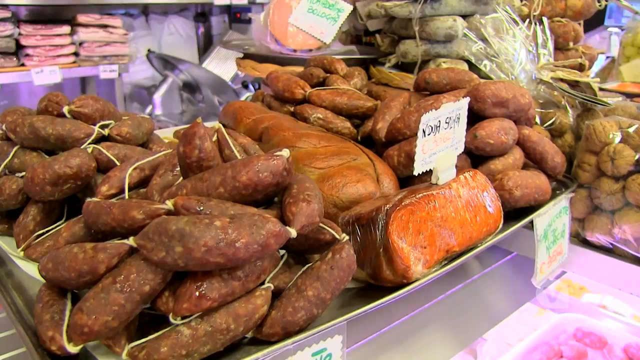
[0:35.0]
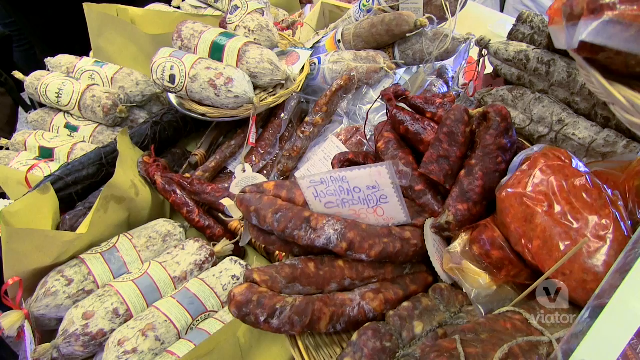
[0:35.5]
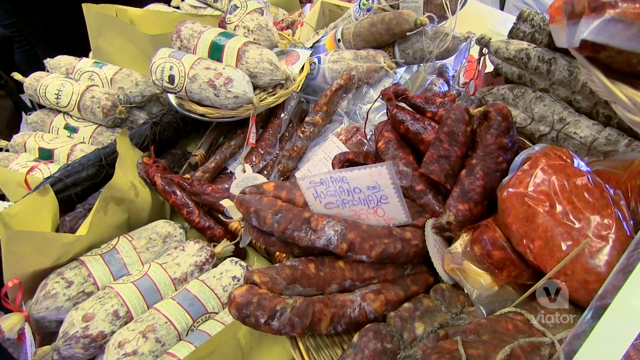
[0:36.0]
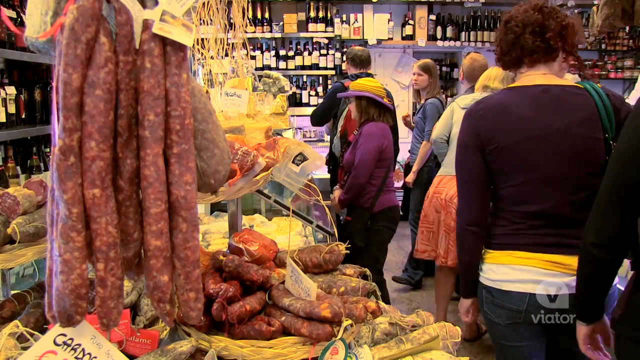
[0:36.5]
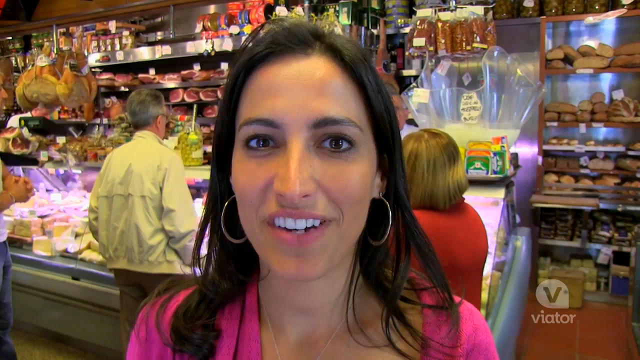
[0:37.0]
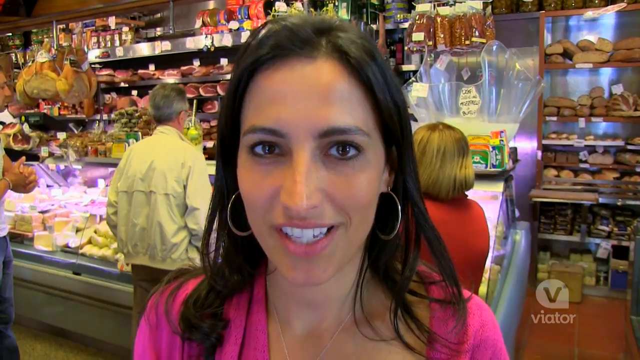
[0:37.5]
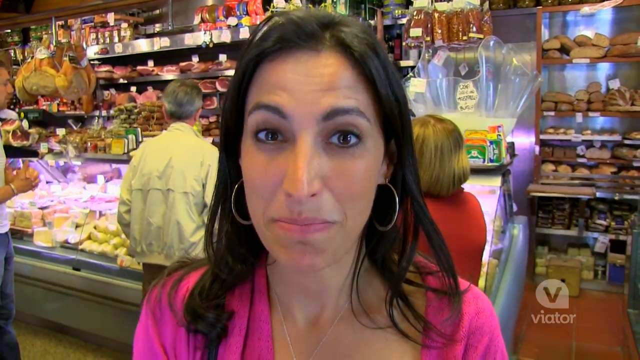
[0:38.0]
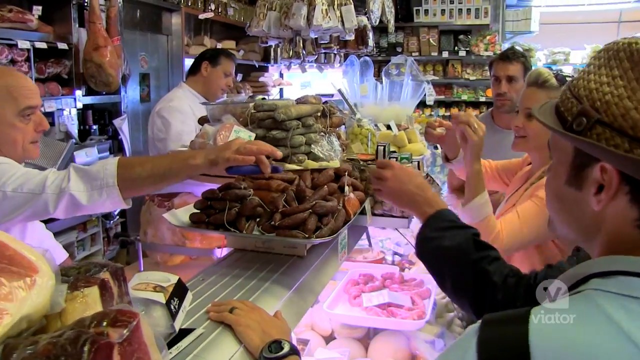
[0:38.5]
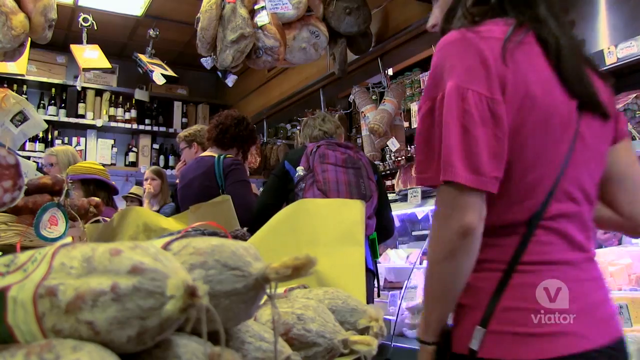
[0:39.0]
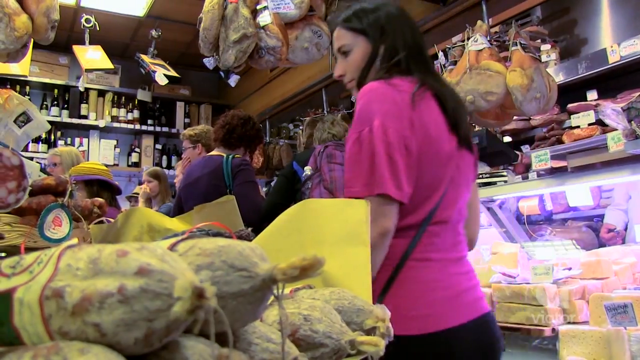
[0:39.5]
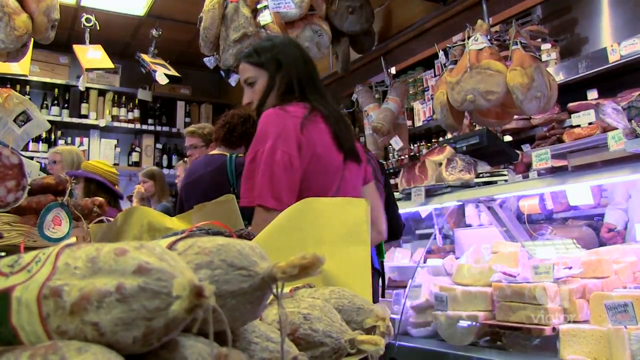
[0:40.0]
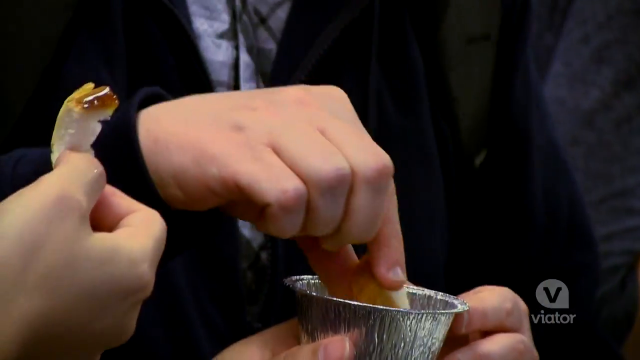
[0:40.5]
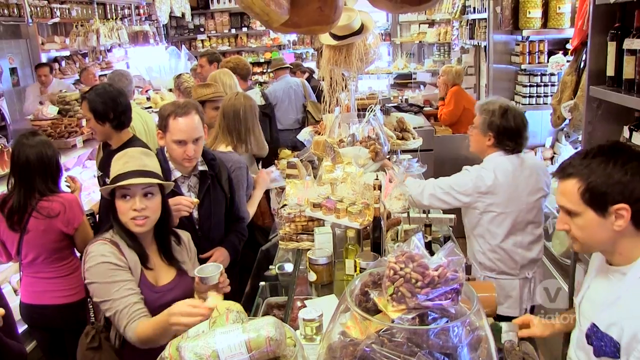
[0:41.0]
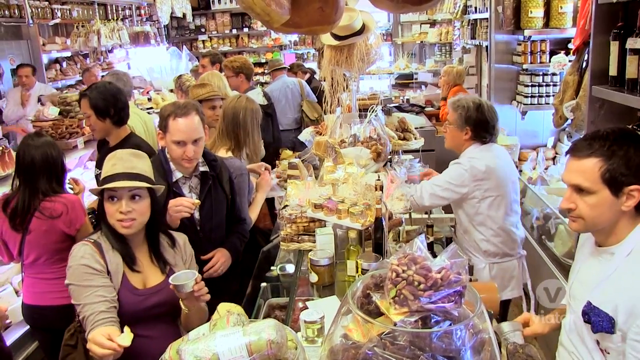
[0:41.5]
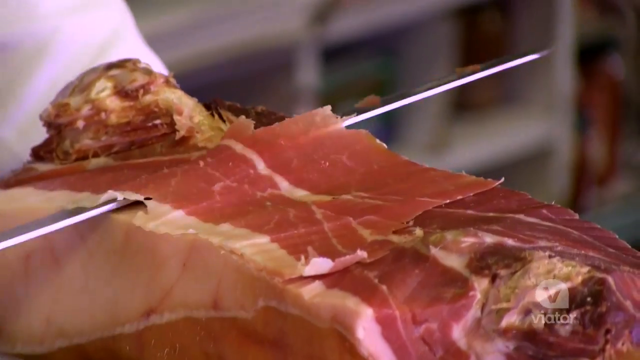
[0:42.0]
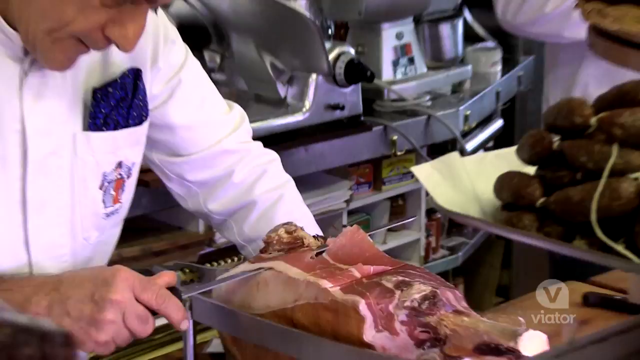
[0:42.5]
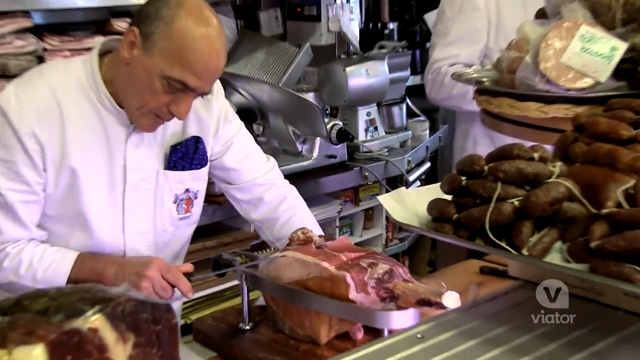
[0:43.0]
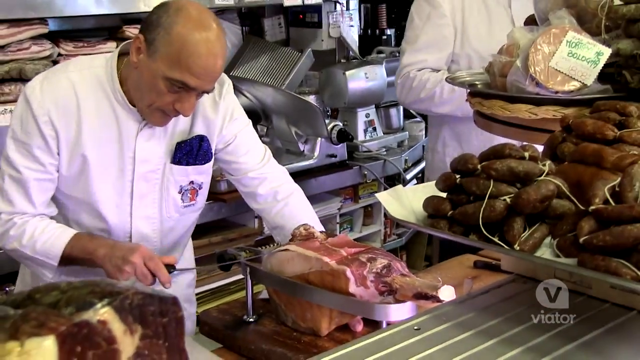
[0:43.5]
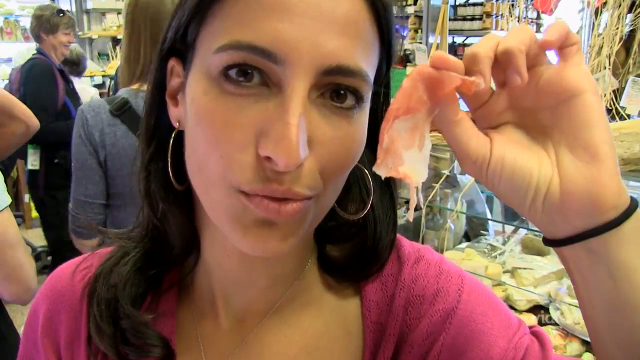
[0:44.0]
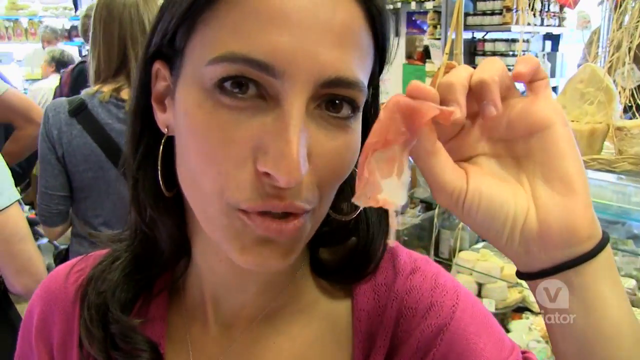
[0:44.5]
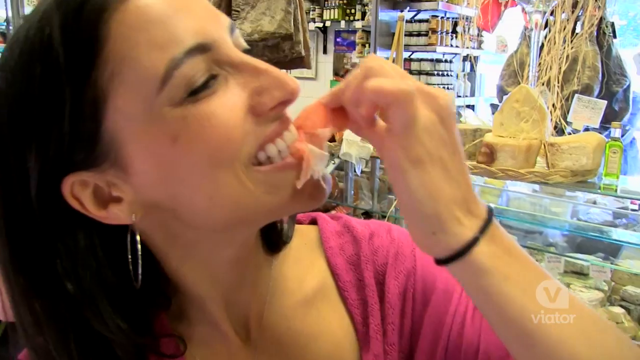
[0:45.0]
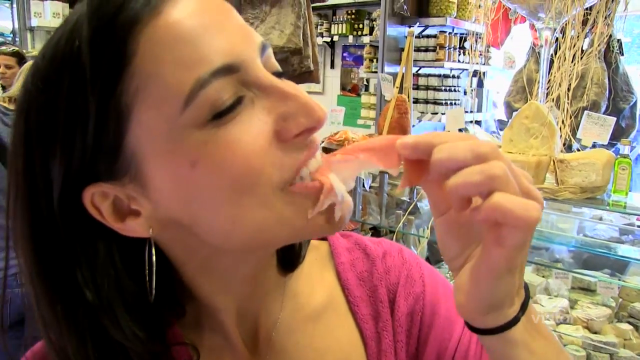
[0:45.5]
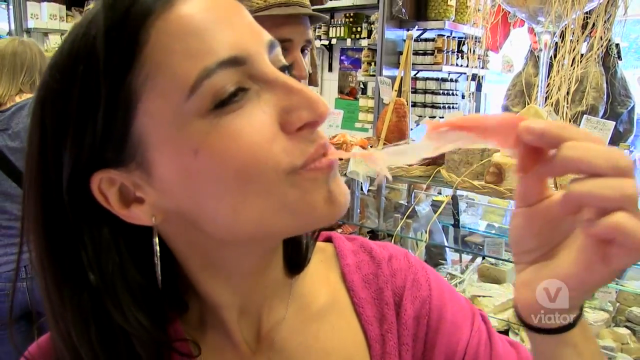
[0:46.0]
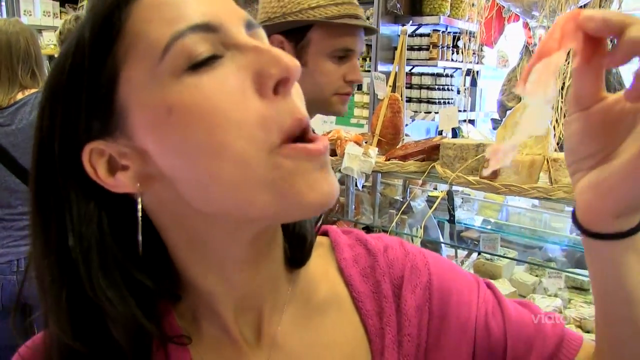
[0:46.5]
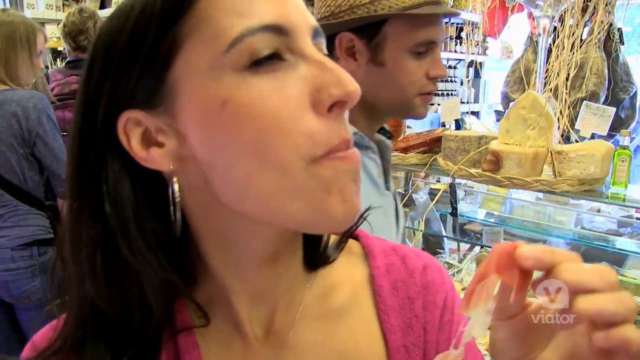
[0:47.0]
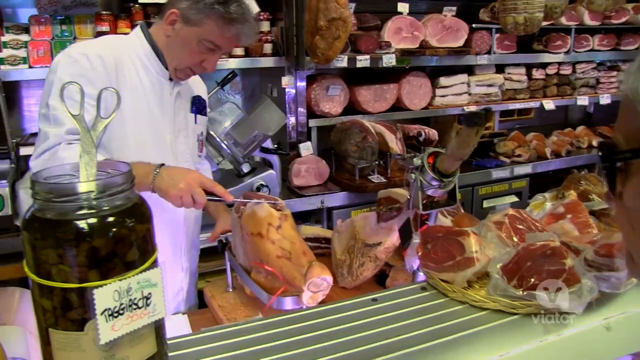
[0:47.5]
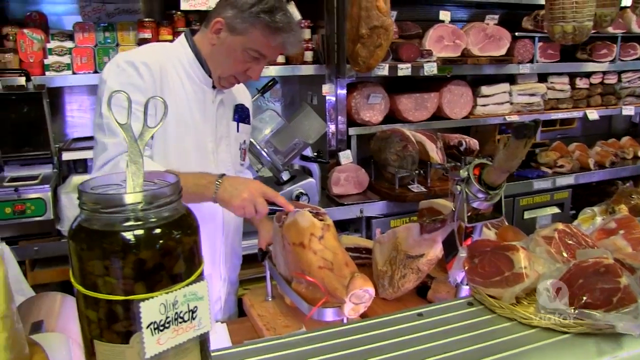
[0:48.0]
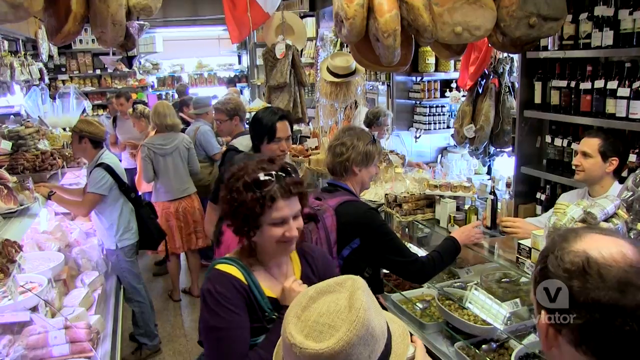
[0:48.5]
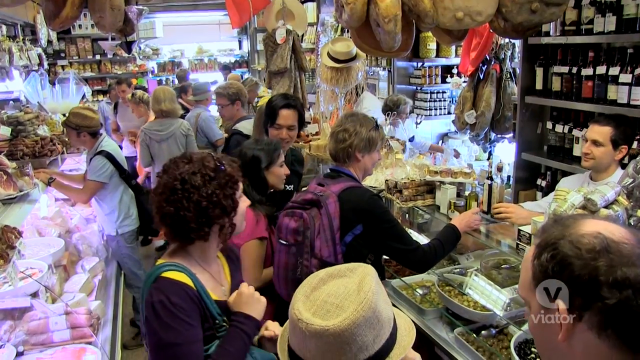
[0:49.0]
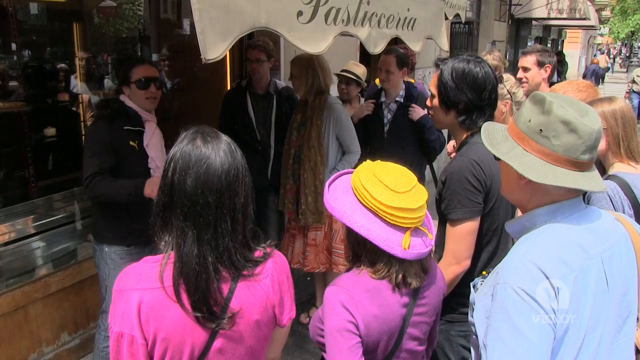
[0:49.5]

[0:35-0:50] A man appears to be slicing something that looks like prosciutto. It is very thinly sliced, and a woman holds it up and eats it, appearing to really enjoy it. She has dark hair and wears a pink top that appears to be a v-neck, hoop earrings and a cross-body handbag. She also has a black bracelet around her wrist, or perhaps some sort of hair band. Where the dry cured meats are sold, people eat bread, apparently dipping it in some sort of sauce. There seems to be a variety of dry cured meats and sausages, some of the sausages hanging in the air, and there appear to be different types of dry cured hams and other delicacies. What look like sweet potatoes or some sort of yam and other root vegetables are also there. People walk around enjoying themselves.